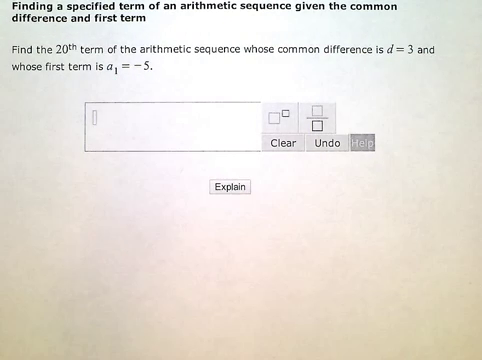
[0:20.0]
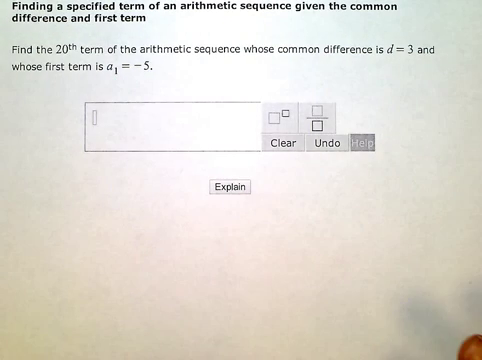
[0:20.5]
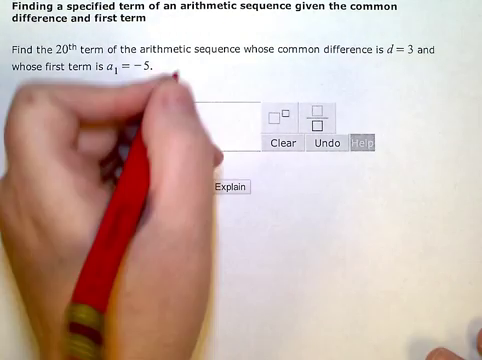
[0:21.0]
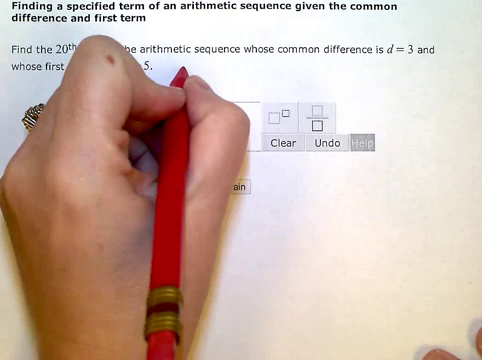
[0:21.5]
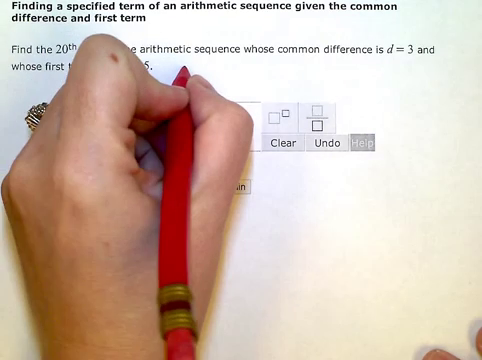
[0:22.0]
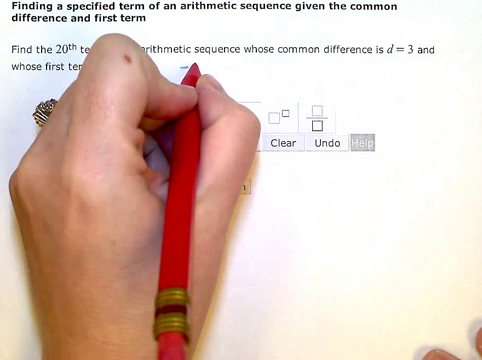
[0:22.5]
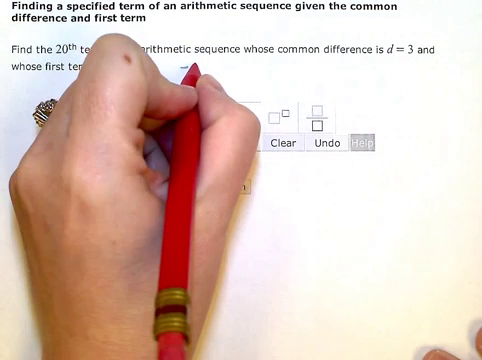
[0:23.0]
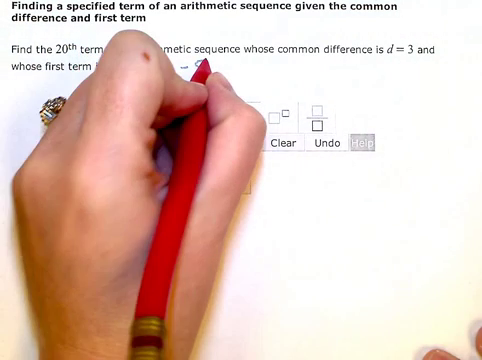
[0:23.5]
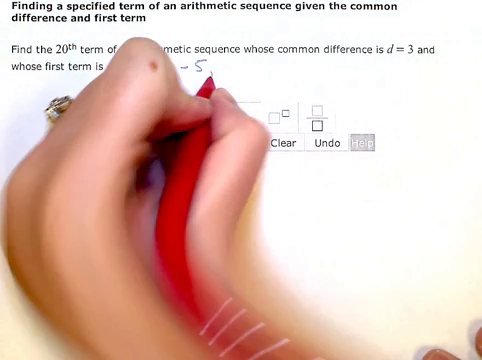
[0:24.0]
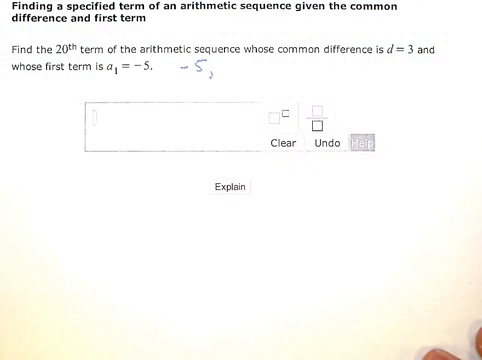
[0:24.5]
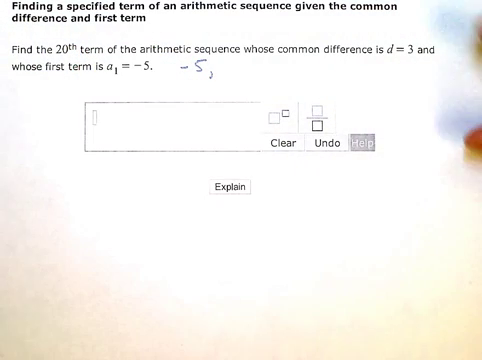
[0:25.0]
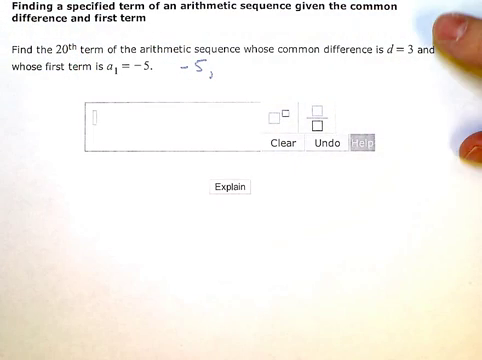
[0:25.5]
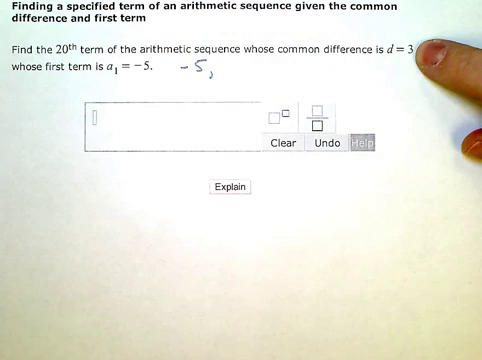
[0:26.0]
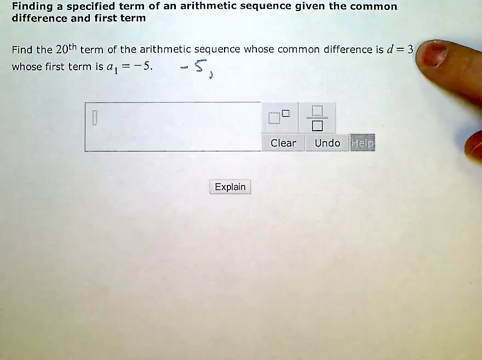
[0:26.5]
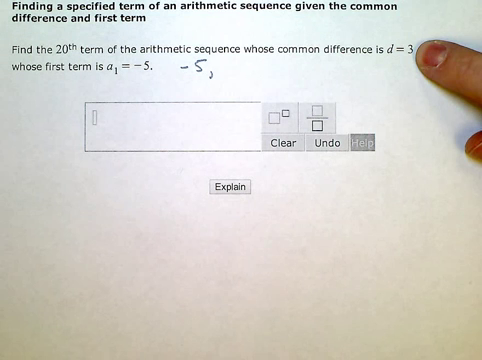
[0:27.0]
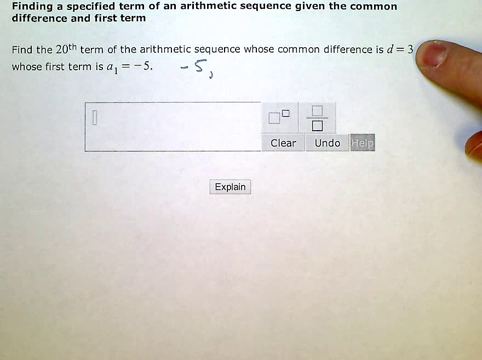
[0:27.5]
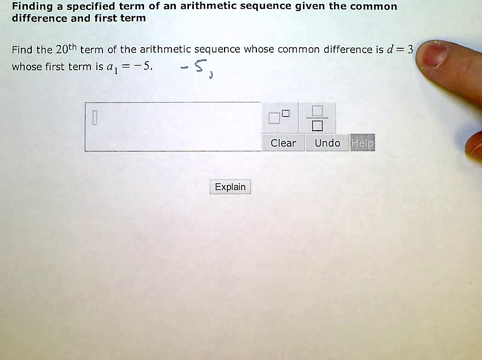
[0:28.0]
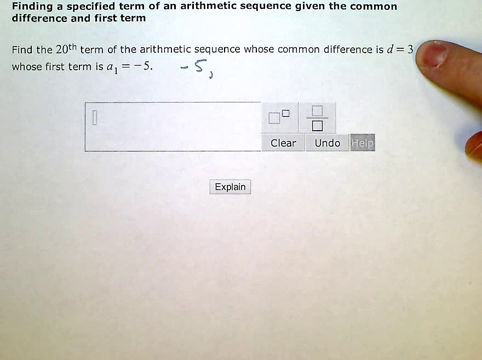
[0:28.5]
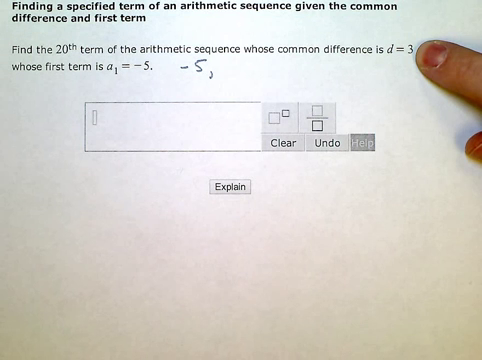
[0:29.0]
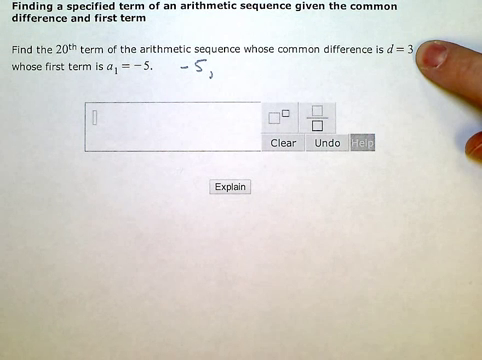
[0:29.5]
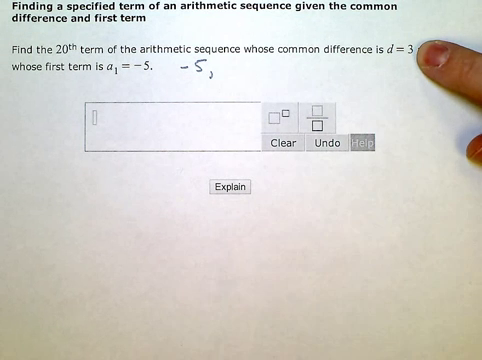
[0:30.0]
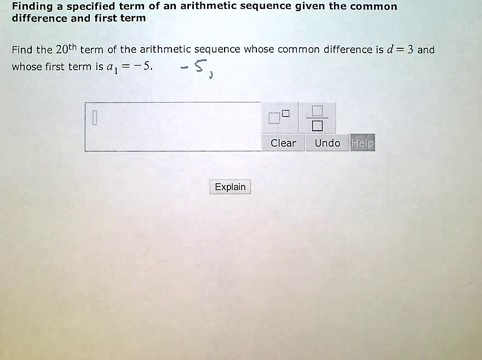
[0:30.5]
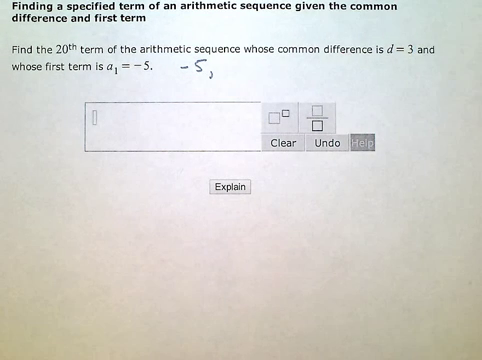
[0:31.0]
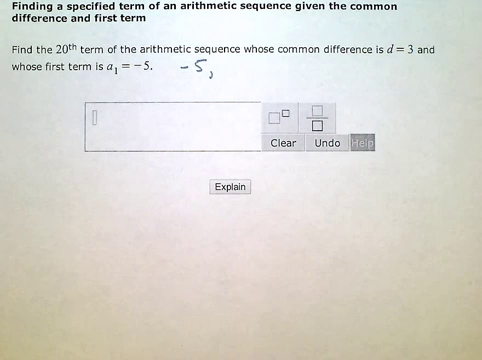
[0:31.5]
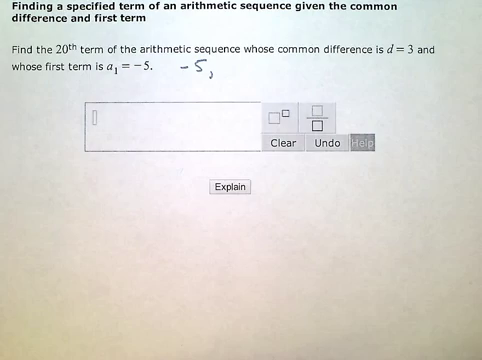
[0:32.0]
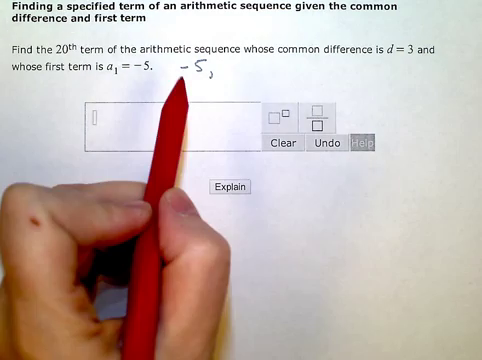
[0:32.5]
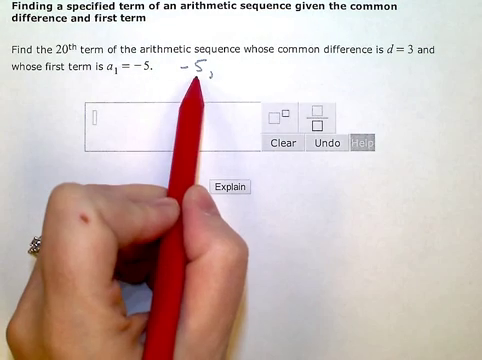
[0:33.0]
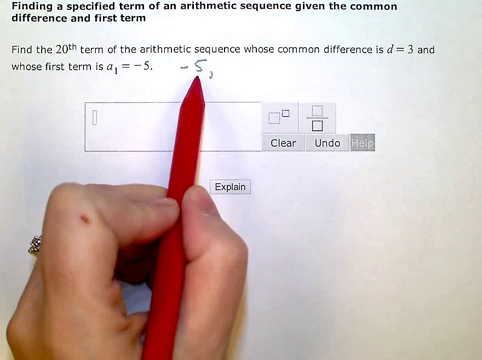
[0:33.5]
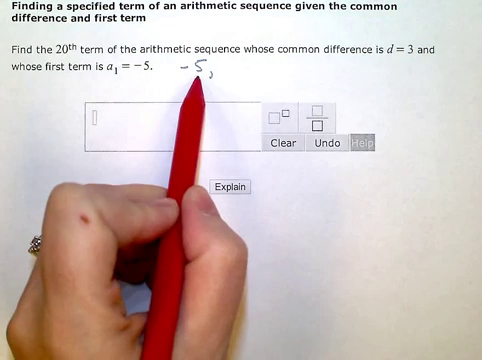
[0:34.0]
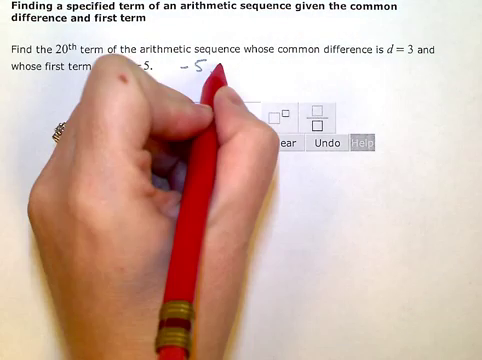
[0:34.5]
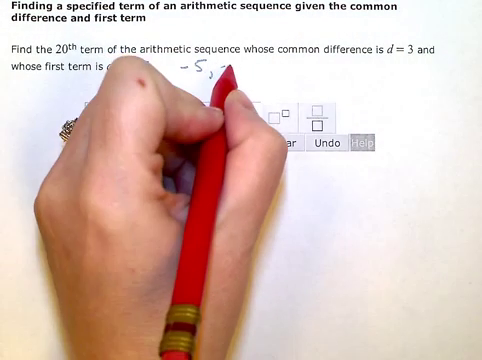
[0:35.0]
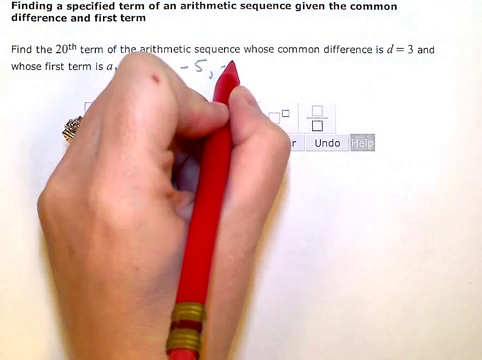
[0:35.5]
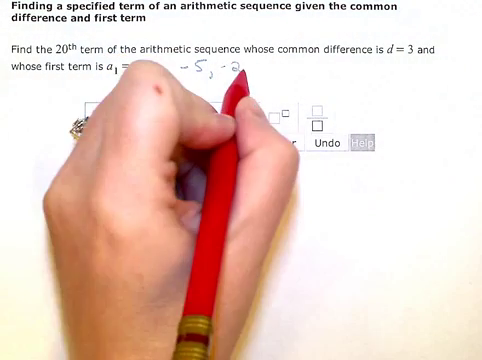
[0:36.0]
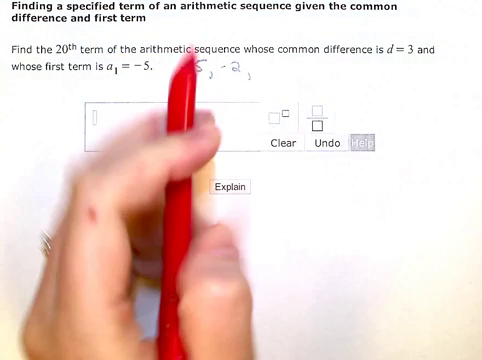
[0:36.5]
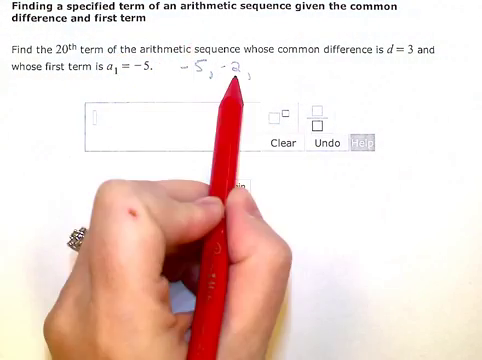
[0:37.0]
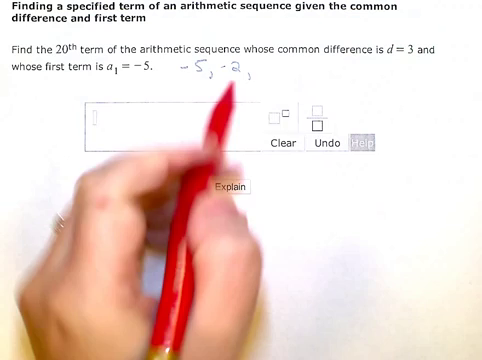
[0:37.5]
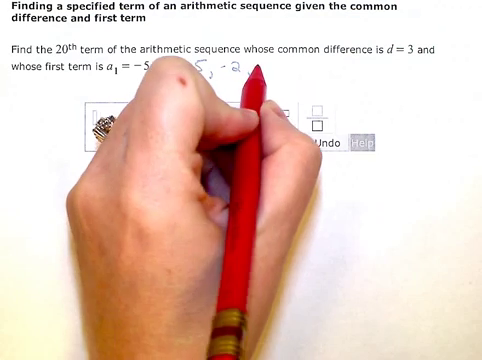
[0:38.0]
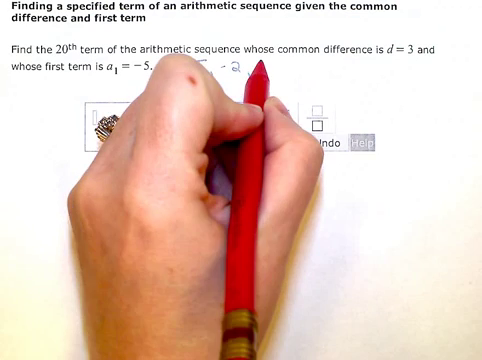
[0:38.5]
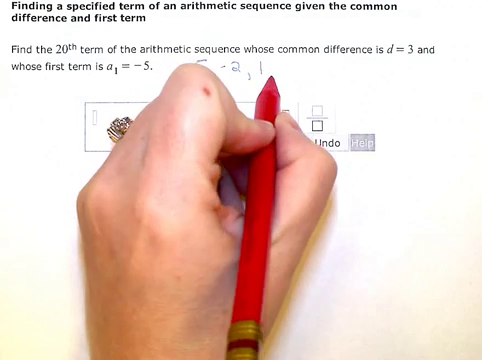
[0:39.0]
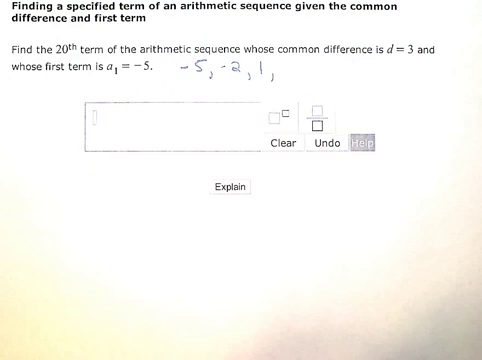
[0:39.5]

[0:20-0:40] The screen shows "find the specified term of an arithmetic sequence given the common difference and first term" and the question "Find the 20th term of the arithmetic sequence whose common difference is d = 3 and whose first term is a1 = -5." An open box has "clear" and "undo" next to it and "explain" below it. Someone writes on the problem with a pencil in their left hand, adding -5, -2, and then 1 at the top, continuing from the -5 already there. None of the numbers are boxed.